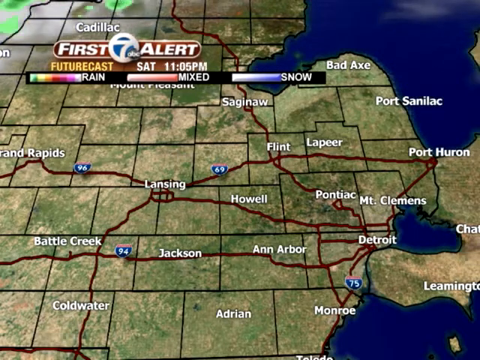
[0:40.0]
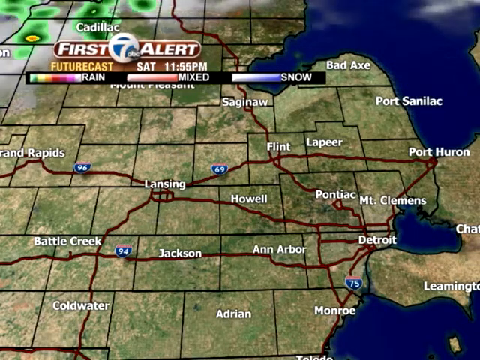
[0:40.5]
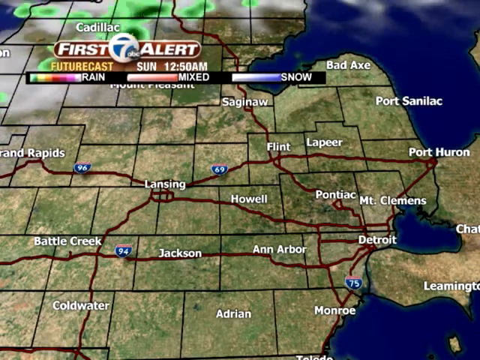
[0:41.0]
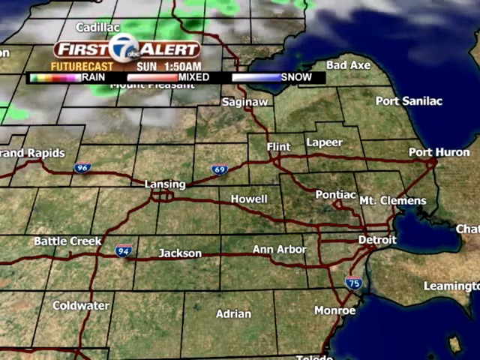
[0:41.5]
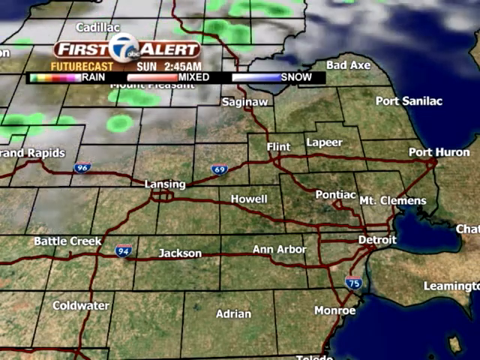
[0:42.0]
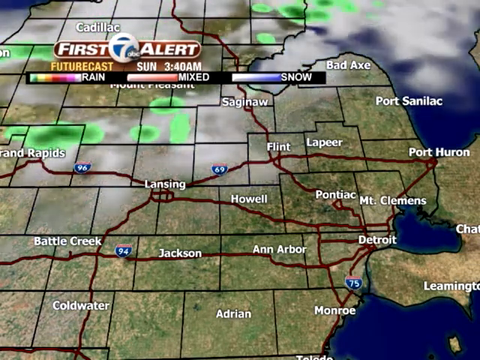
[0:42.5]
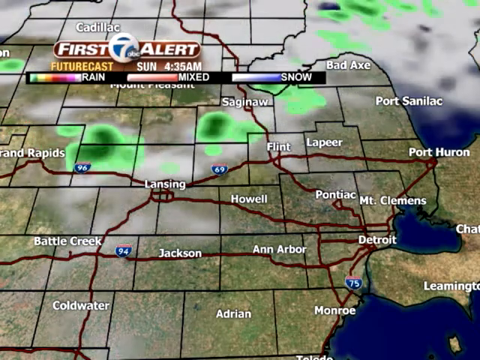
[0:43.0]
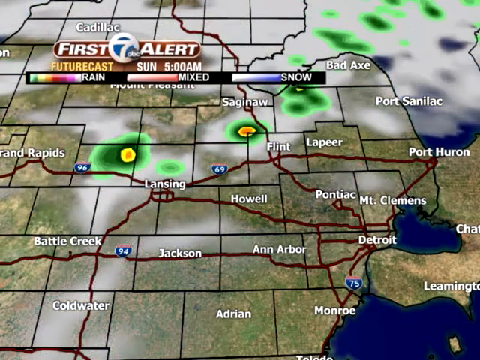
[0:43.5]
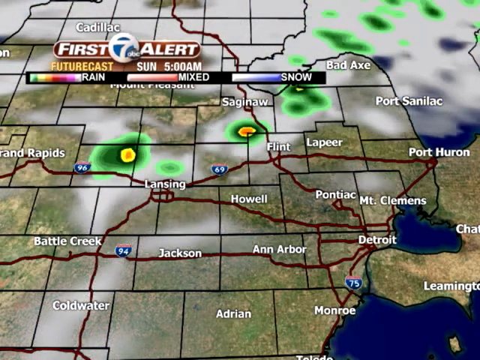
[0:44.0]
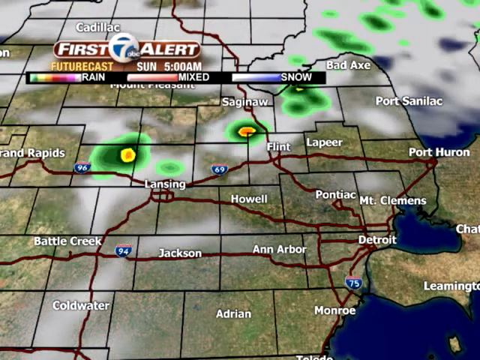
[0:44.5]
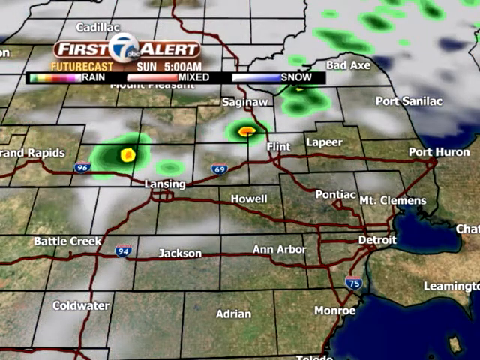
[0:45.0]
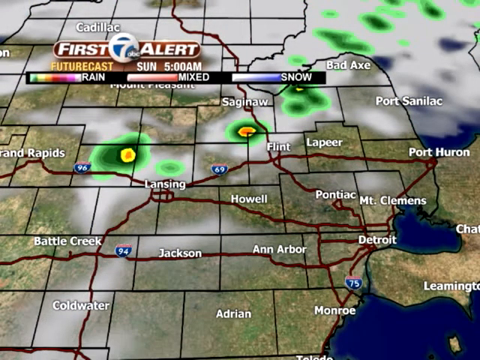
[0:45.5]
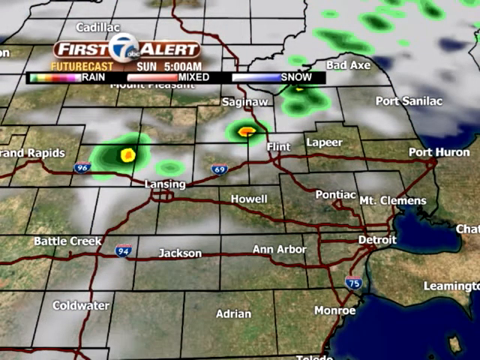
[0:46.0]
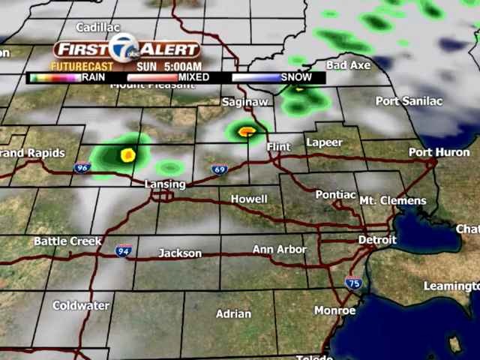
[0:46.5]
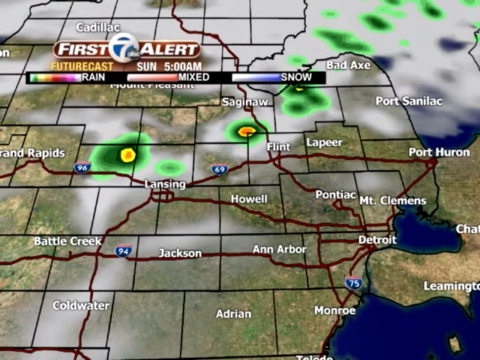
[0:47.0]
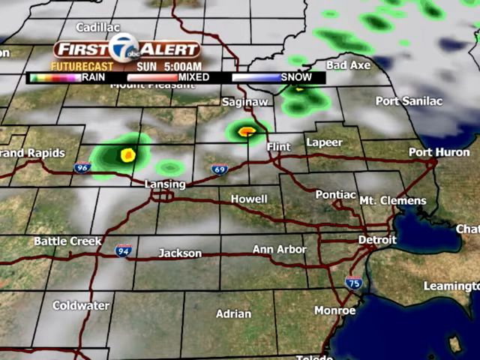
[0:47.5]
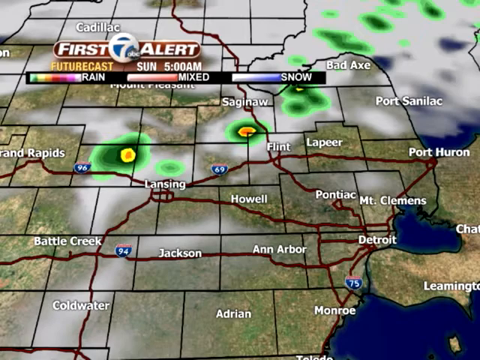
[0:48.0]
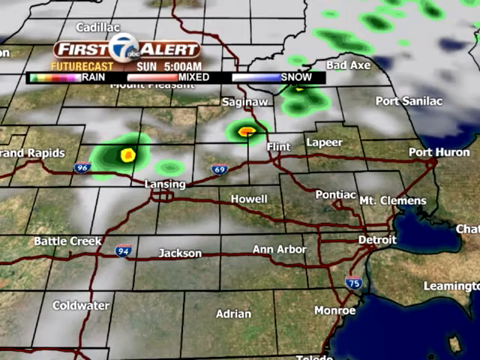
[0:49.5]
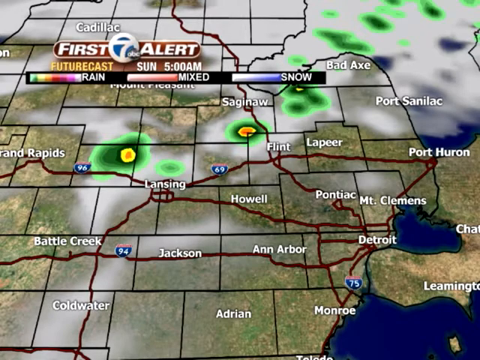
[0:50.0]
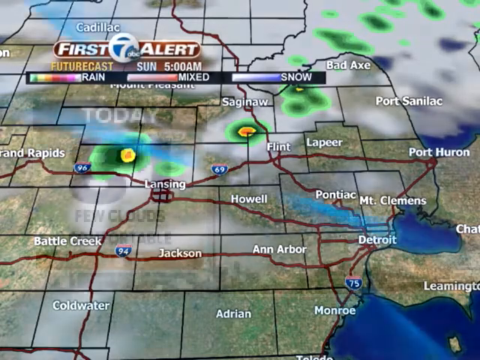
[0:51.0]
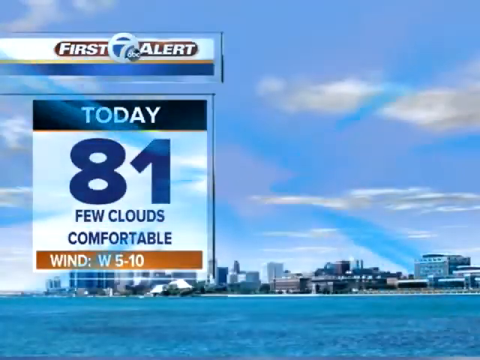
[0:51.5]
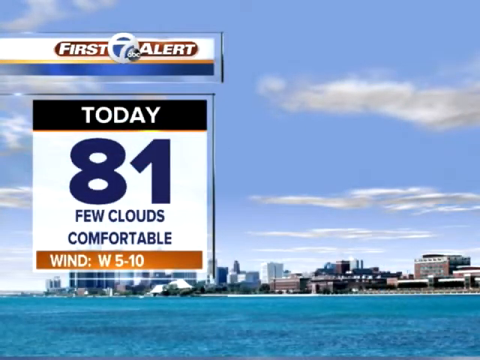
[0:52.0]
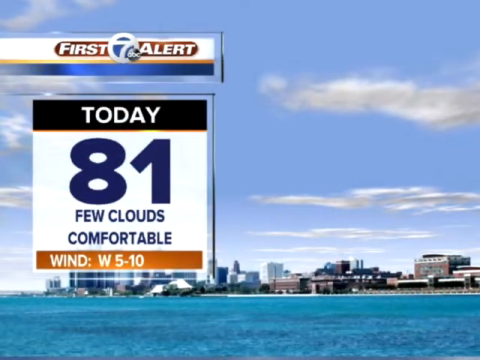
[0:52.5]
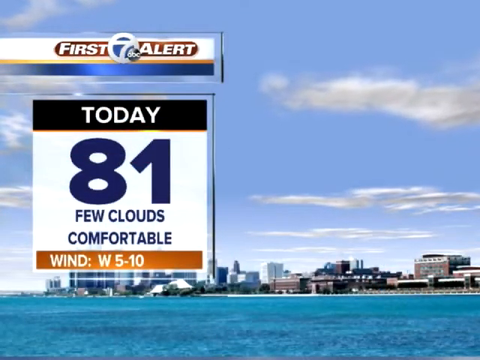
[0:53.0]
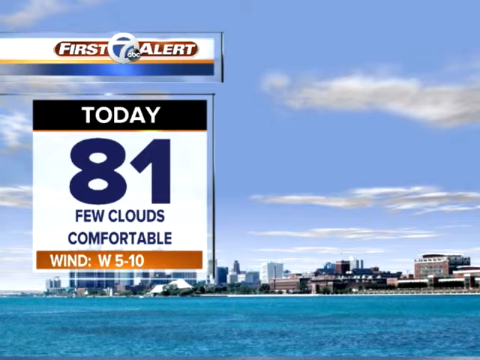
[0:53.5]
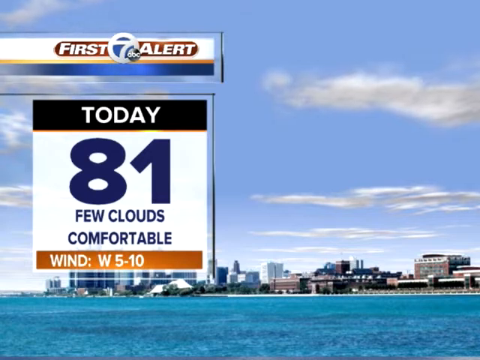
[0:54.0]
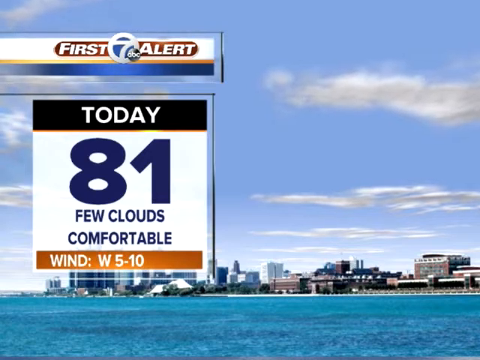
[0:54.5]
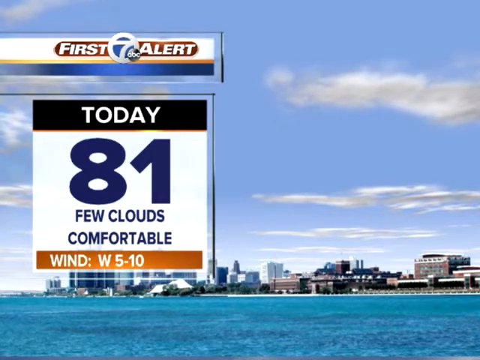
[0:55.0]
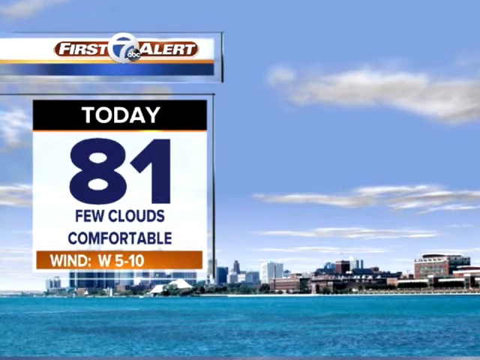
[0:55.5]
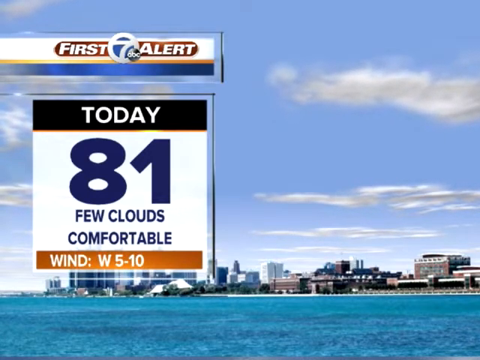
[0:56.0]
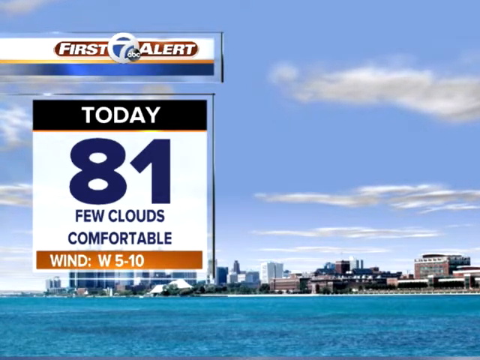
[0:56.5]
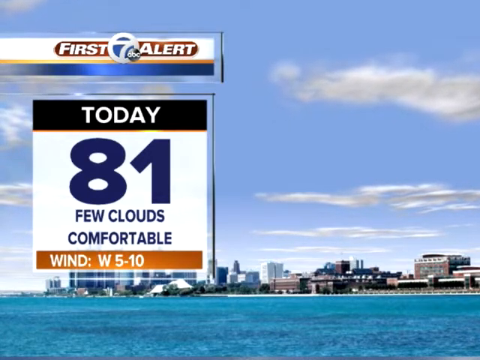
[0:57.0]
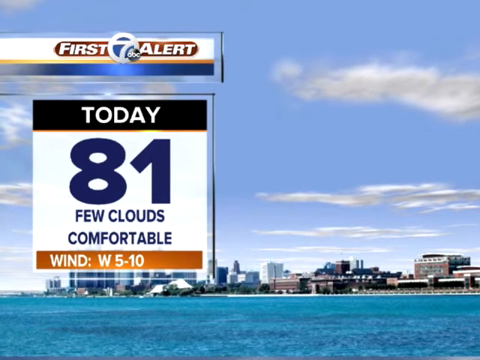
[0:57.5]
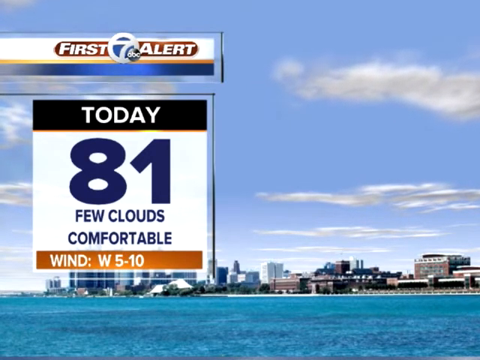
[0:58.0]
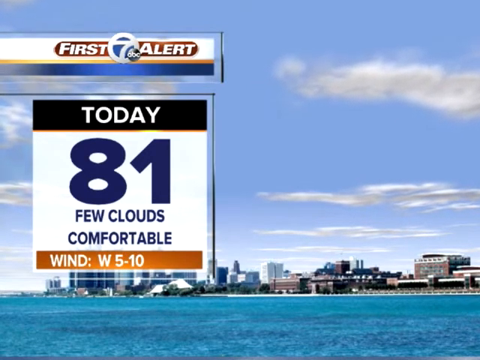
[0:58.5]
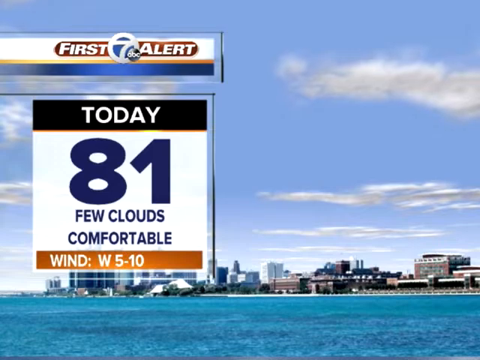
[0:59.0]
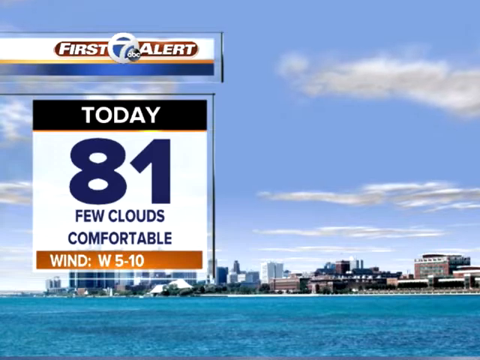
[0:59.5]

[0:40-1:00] A green map with black borders shows many red lines representing freeways, with numbers reading 75, 94, 69, and 96. Clouds come from the top left side of the screen and seem to be moving down, followed by radar that is green with sort of yellow and orange circles on it. White text on the map marks cities including Ann Arbor, Detroit, Pontiac, Monroe, and Battle Creek. The video then cuts to a graphic that says "First Alert" with the number 7 and the ABC logo. Underneath is a header reading "Today" with the temperature "81" in blue text and "A few clouds comfortable." Below that, white text reads "Wind", "W", and "5-10". In the background is a cityscape with a body of water in the foreground of the city, and a blue sky with patchy white clouds.